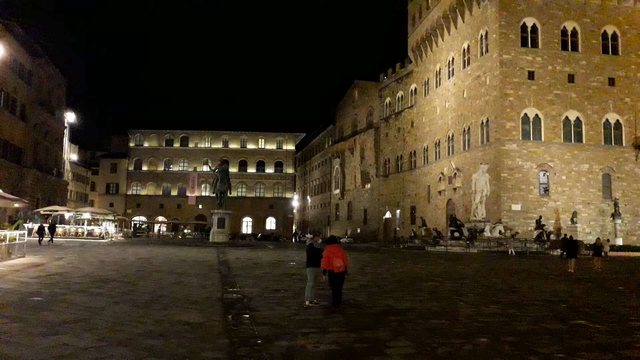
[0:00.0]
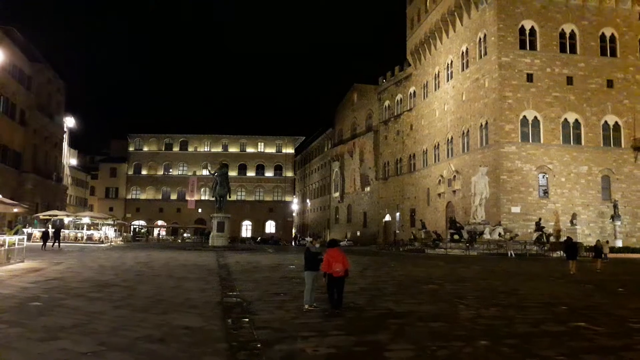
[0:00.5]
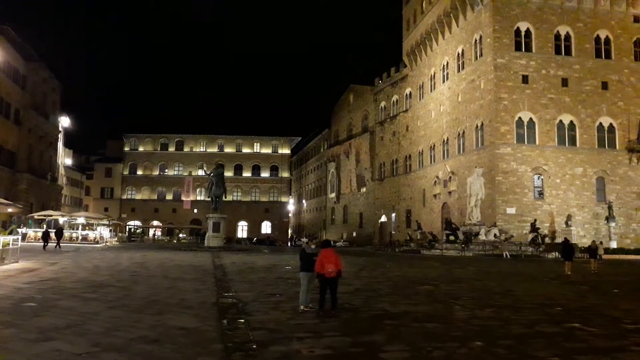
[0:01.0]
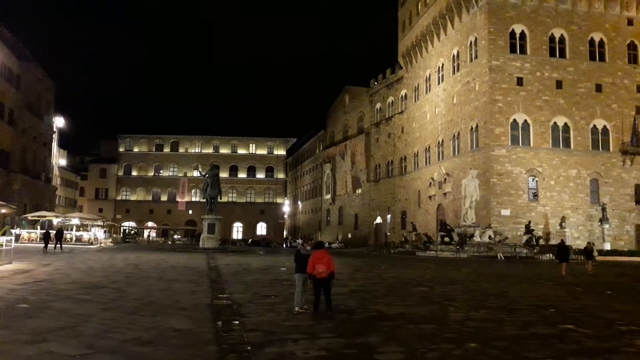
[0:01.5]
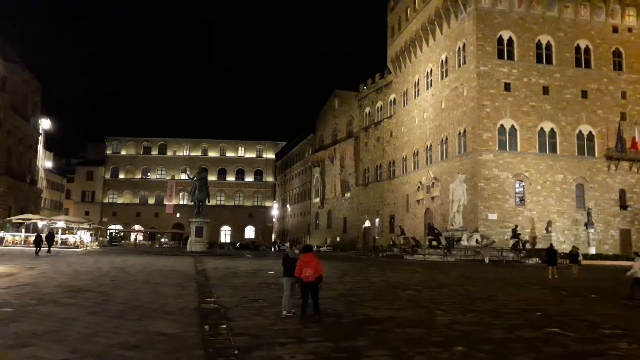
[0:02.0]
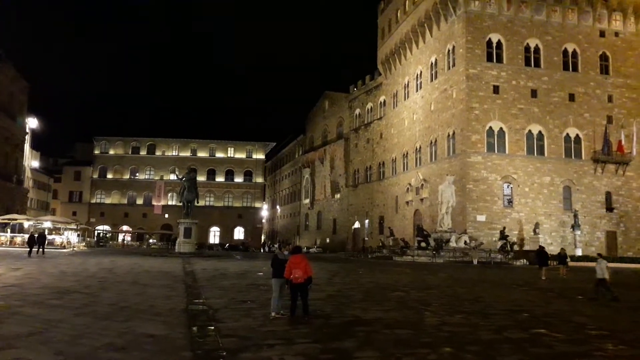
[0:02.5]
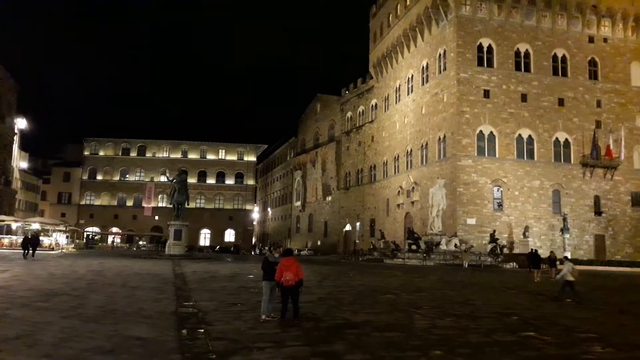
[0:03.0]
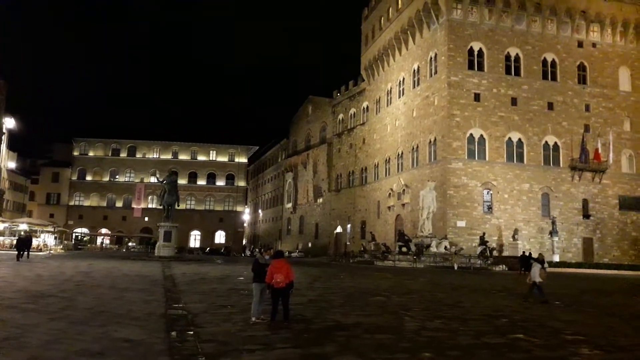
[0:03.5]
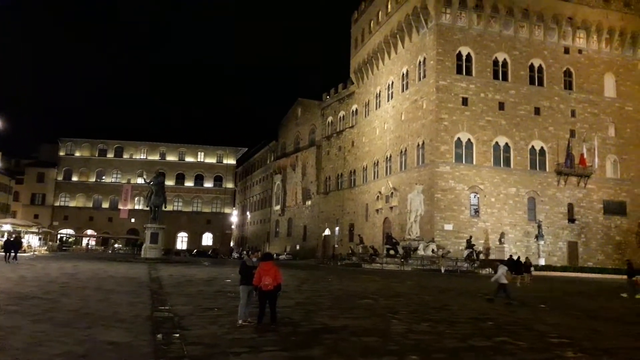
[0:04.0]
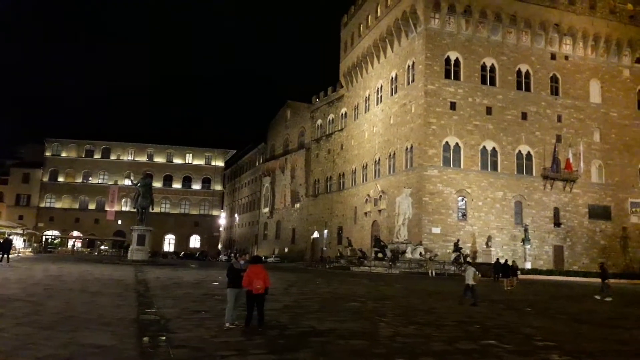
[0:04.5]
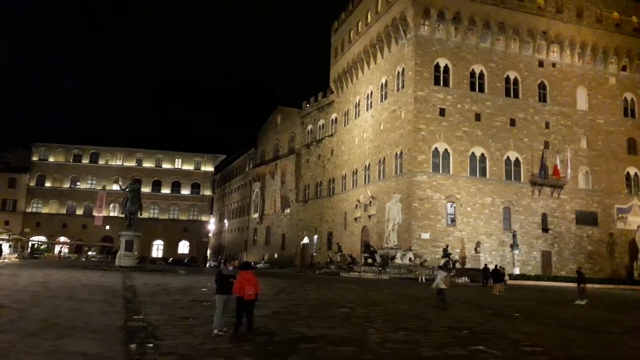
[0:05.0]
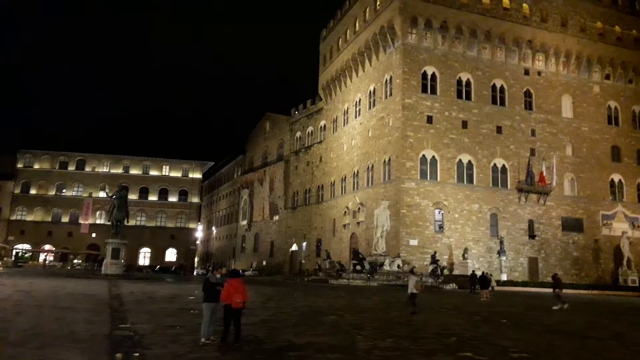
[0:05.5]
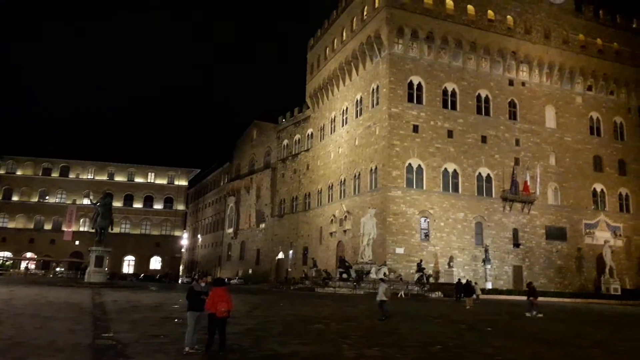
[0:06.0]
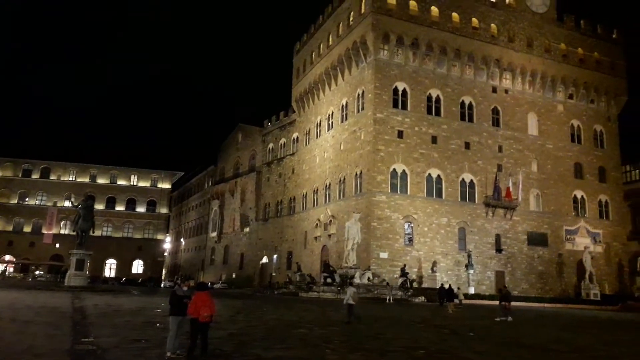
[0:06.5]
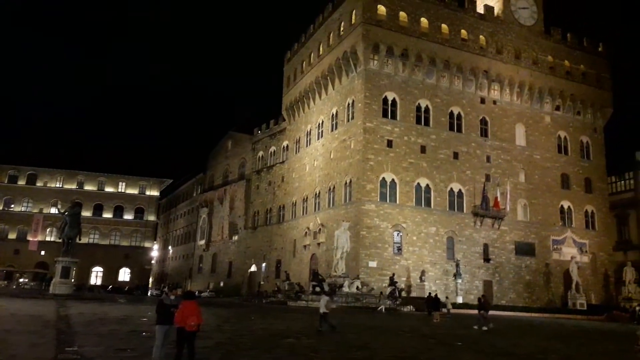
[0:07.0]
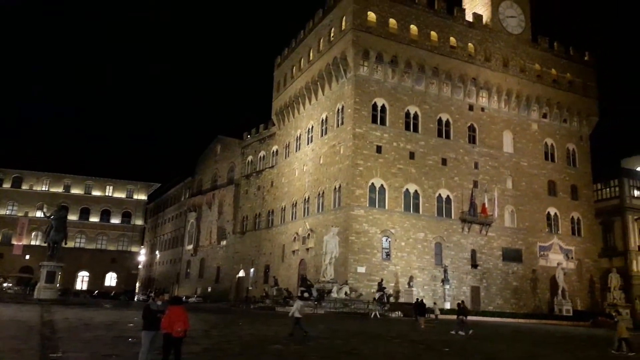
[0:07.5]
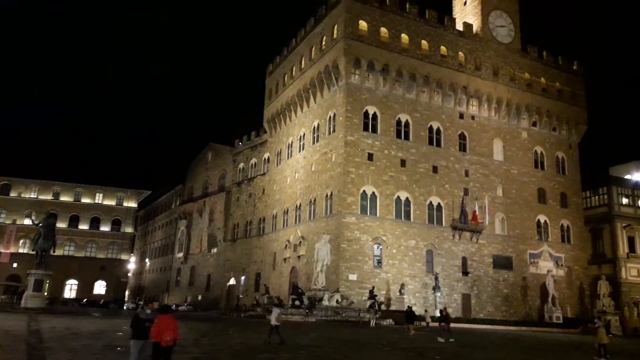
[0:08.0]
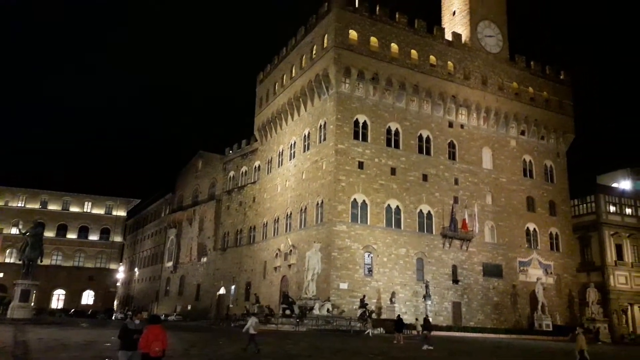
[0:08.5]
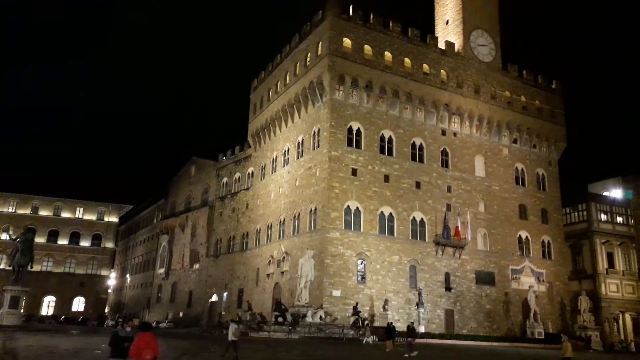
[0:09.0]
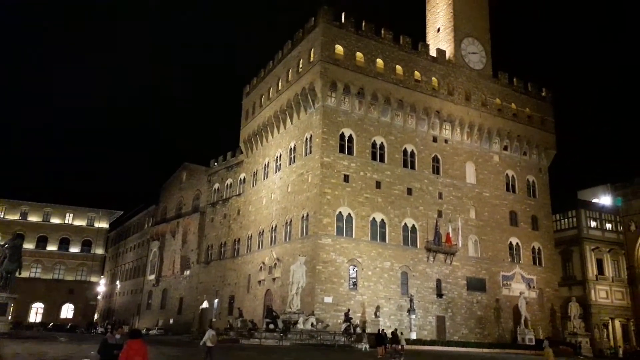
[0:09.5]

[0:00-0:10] A building that almost looks like a castle stands with a clock tower on it. It has about three or four stories and looks medieval, and it is made of beige bricks. Its windows are very slim and look like stained glass, set inside arches. In the distance there is a statue of a man on a horse on a marble base, with buildings behind it. The camera sort of pans around. It is nighttime, so not much is visible; there are some lights around. There are people in the square, though not many. There might be a fountain in the distance with white horses coming out of it. The location is probably Copenhagen, though this is uncertain.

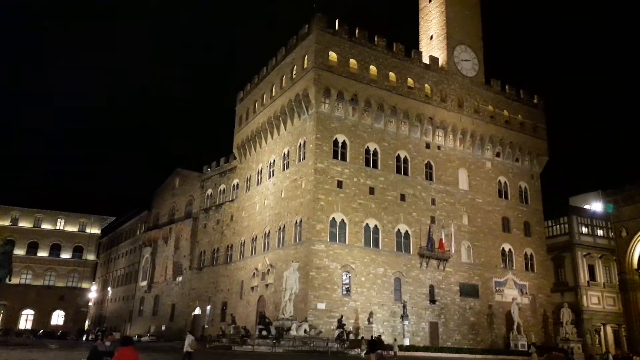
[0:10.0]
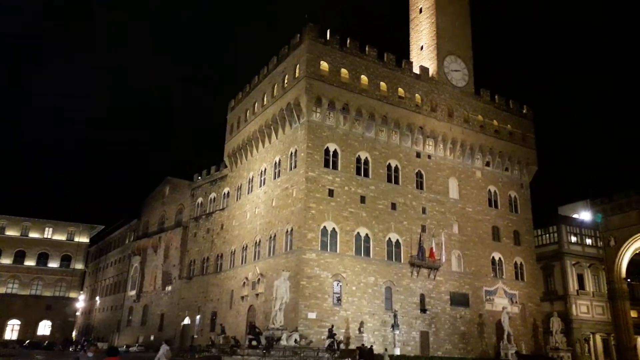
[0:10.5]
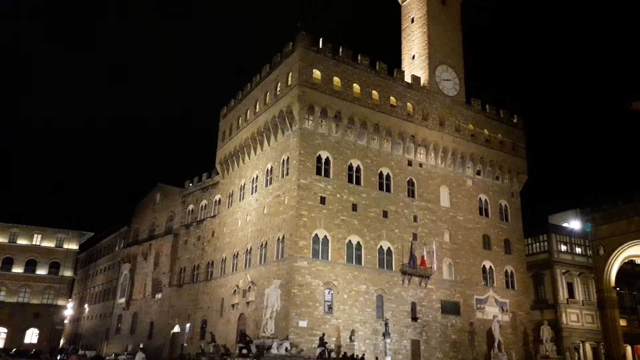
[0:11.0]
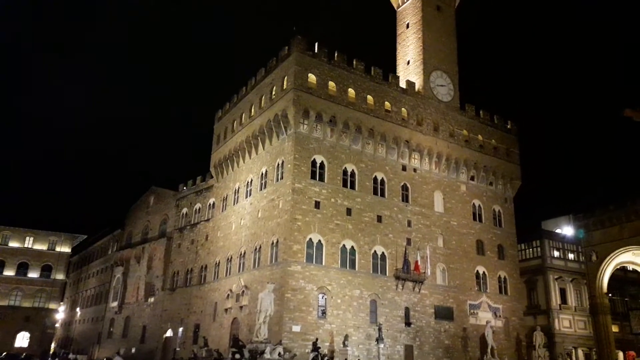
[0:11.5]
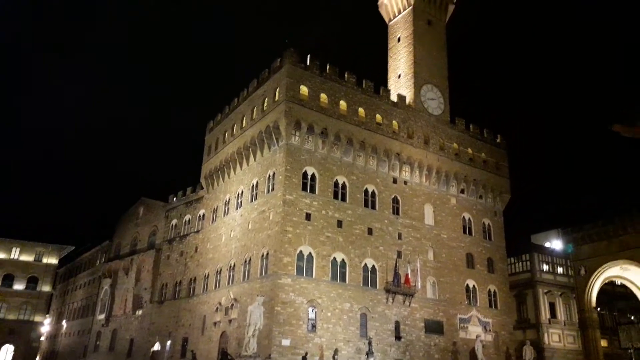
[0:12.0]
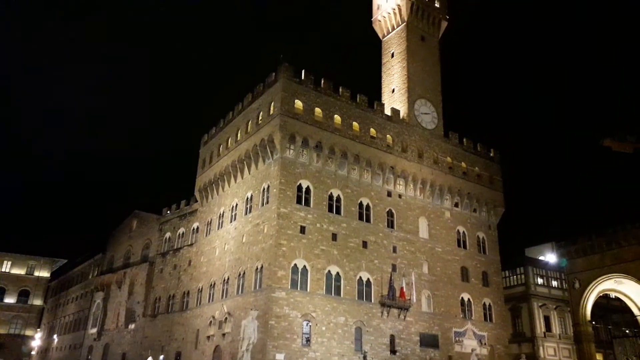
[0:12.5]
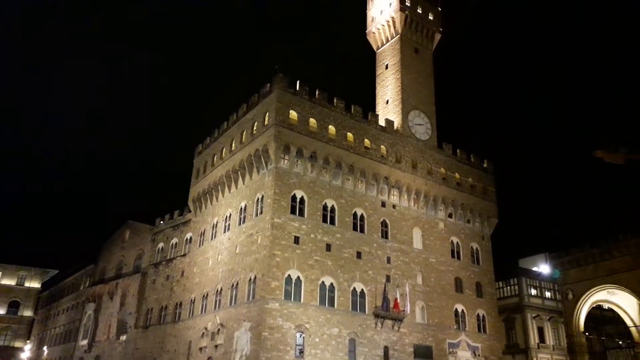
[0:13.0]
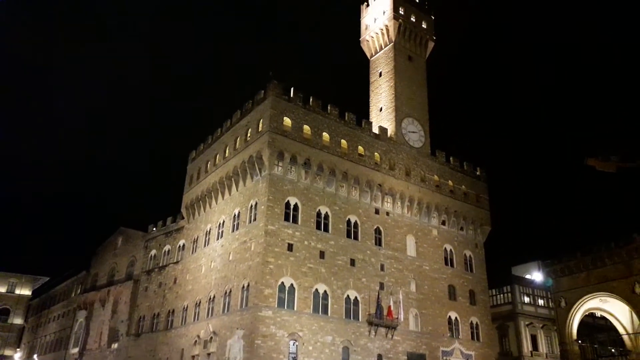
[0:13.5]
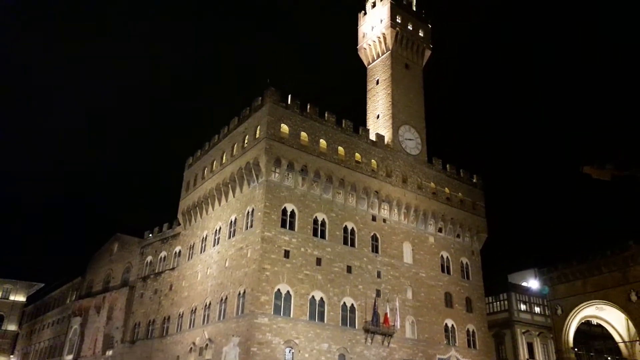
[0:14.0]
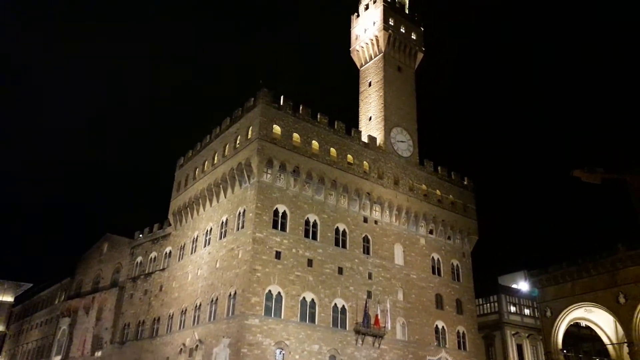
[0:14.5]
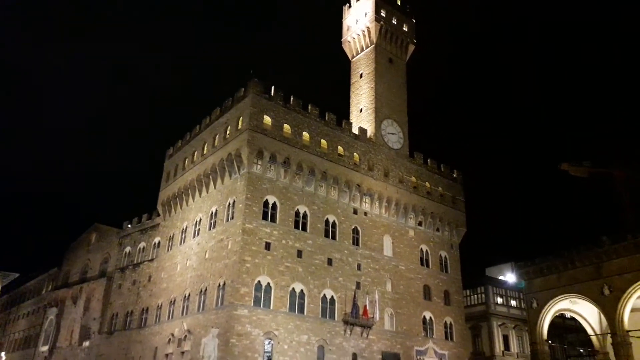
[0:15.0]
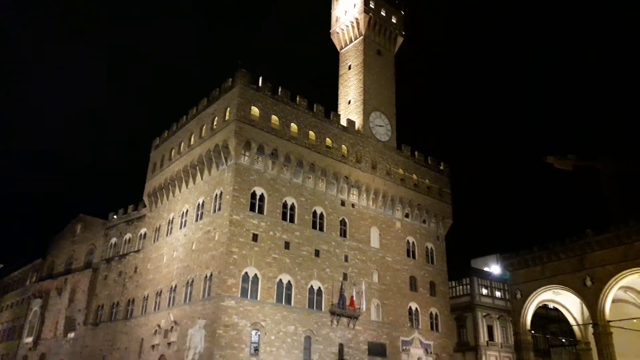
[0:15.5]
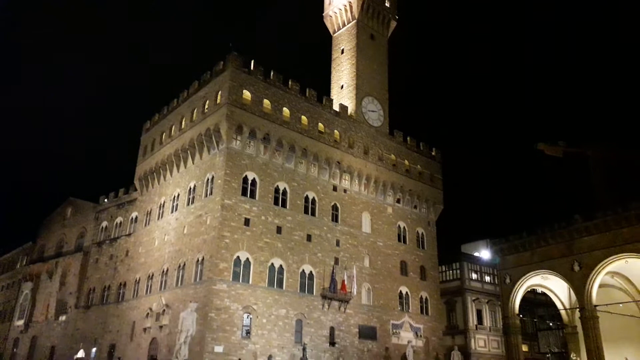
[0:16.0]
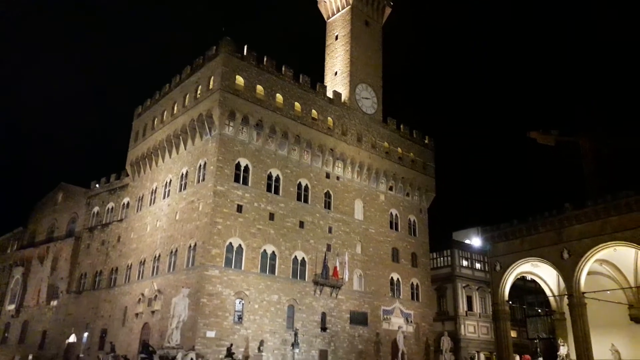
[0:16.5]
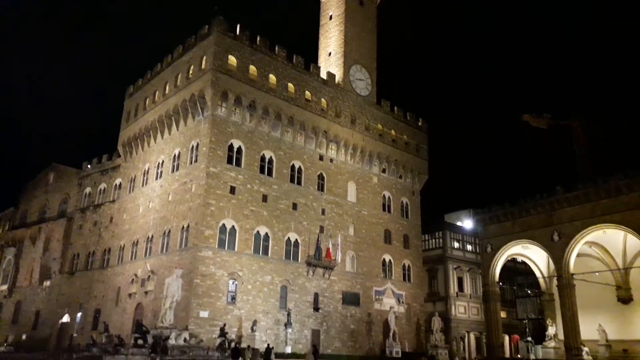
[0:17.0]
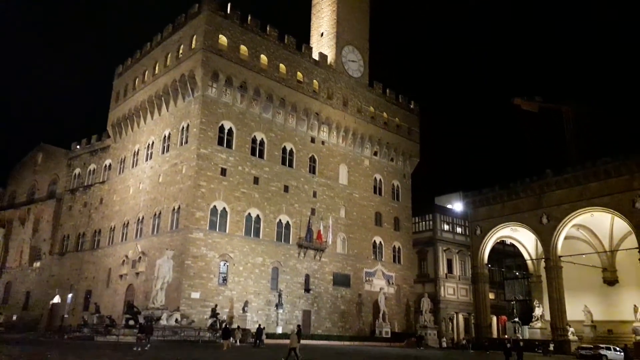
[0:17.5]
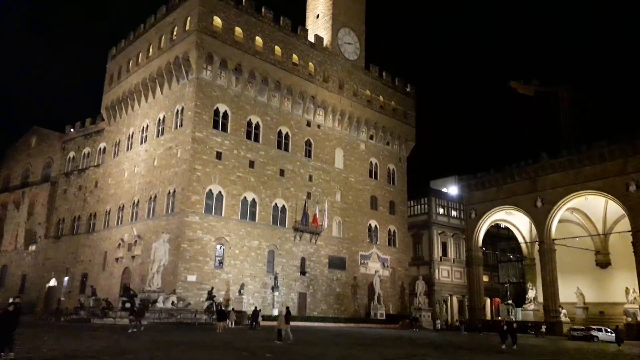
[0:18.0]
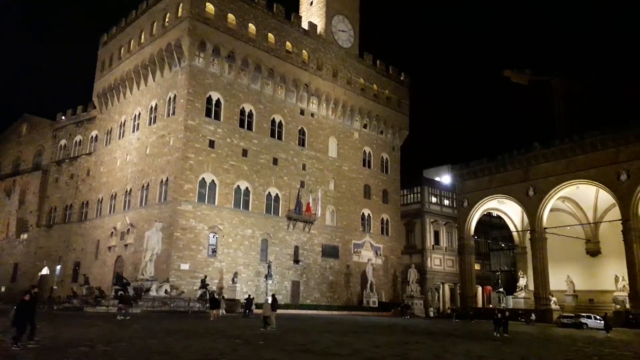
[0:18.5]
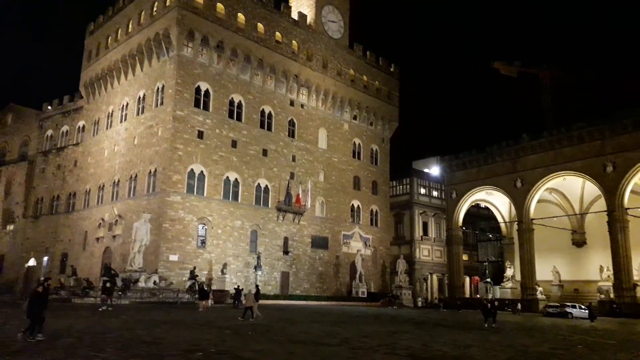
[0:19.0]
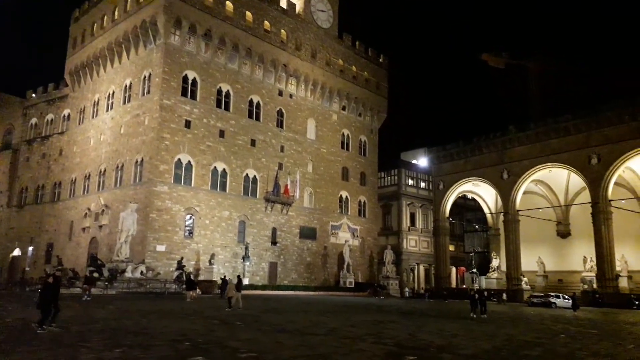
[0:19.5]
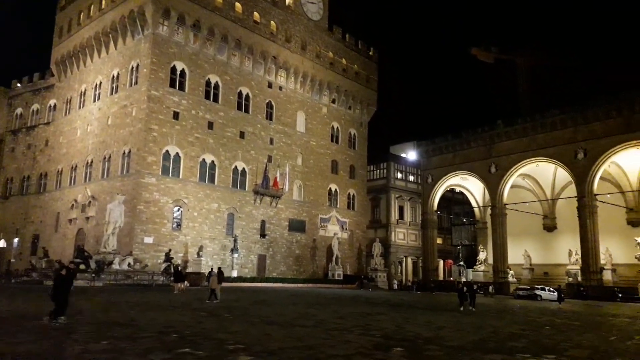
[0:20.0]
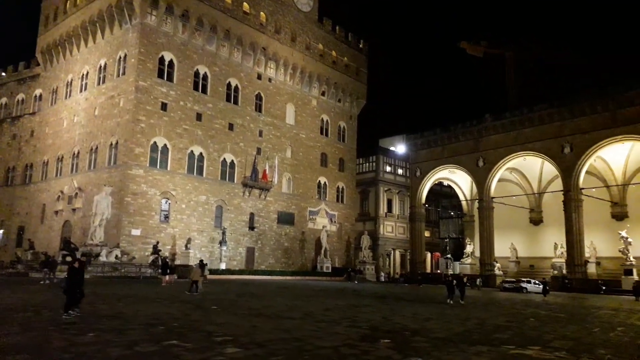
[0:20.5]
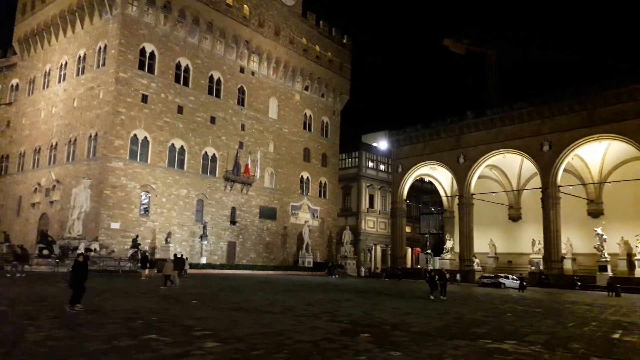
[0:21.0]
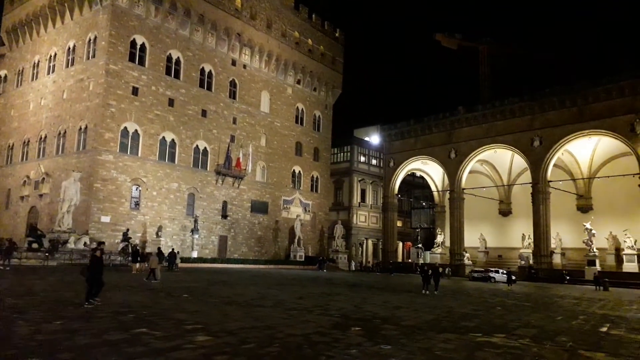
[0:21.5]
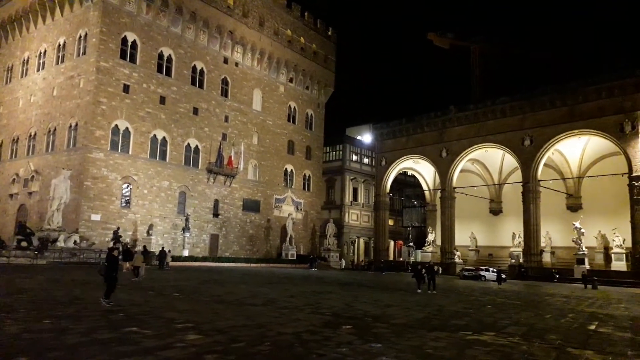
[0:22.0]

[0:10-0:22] What looks to be a medieval castle has a clock tower that was probably added later. It is quite tall, with at least five very tall stories, and a crenellated area at the top. Its windows are like slices of stained glass set in arches, possibly added later. There is a balcony, there are arched doorways, and there is a round white clock that looks kind of like a Big Ben type clock. The brick castle is very square; the view may show just the end of it. It is built of beige bricks, with some bricks that are almost white. It is nighttime, so it is kind of hard to see everything, and there are lights around the castle. The camera does not pan very far. This might be in Copenhagen, Denmark.